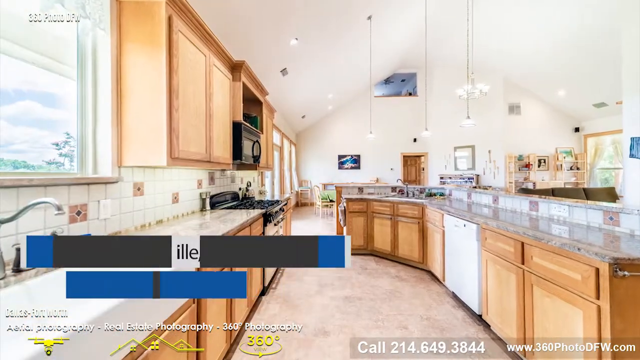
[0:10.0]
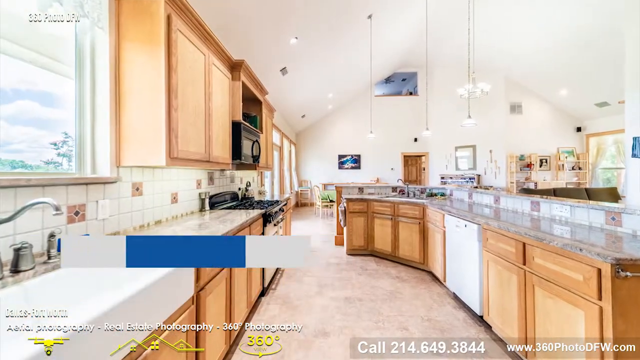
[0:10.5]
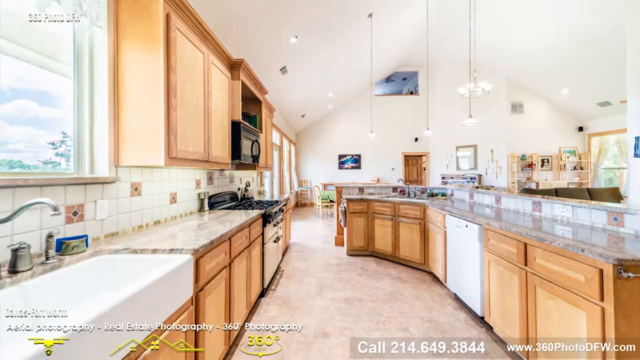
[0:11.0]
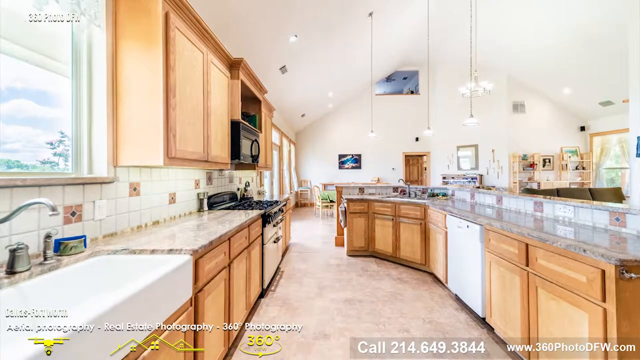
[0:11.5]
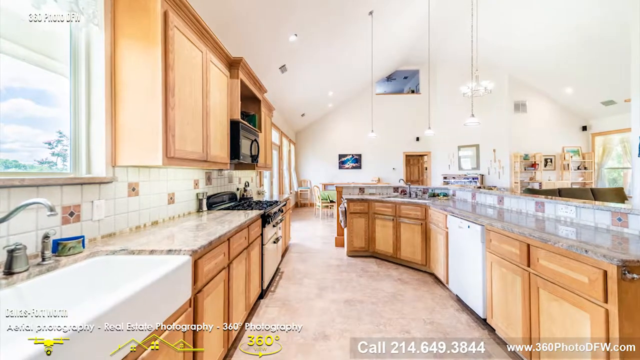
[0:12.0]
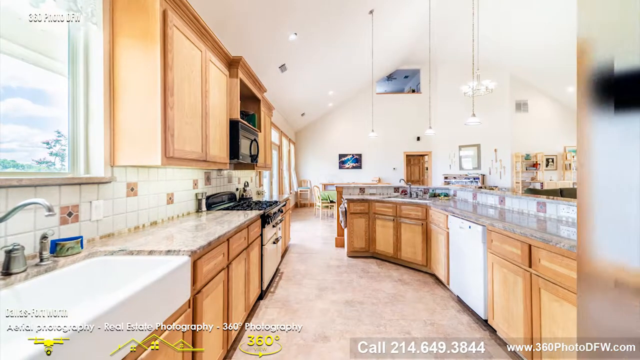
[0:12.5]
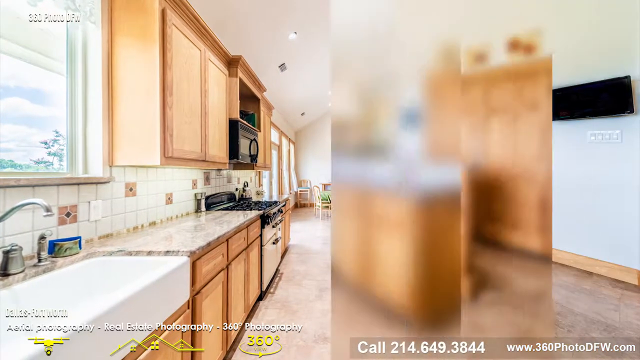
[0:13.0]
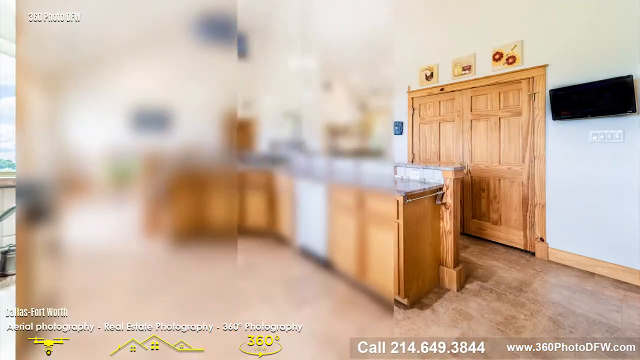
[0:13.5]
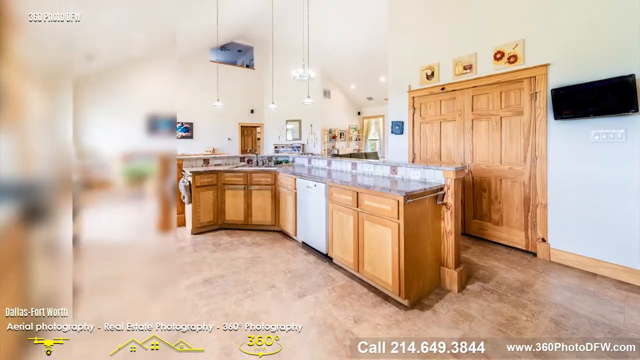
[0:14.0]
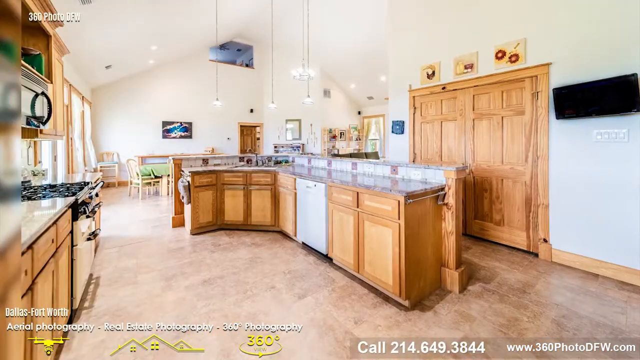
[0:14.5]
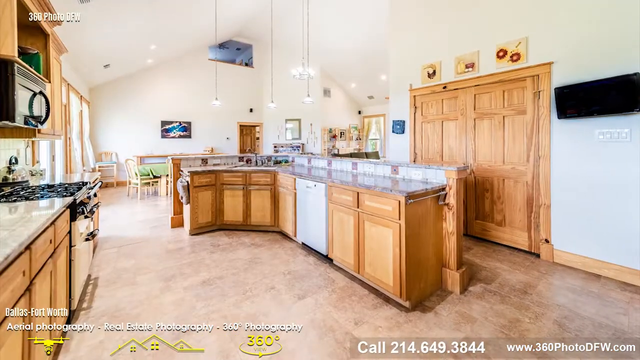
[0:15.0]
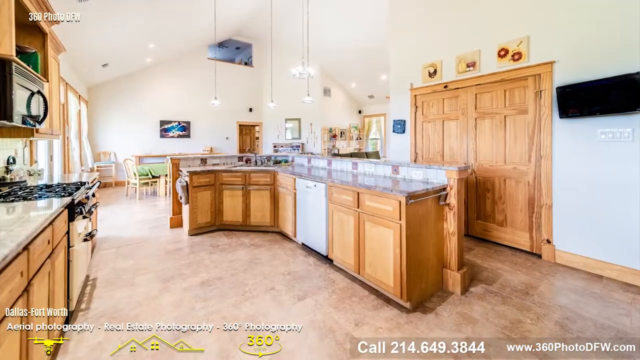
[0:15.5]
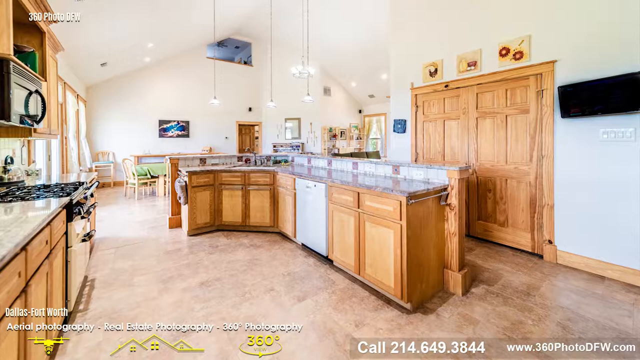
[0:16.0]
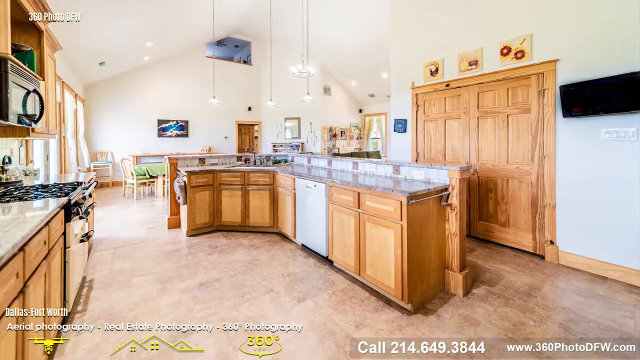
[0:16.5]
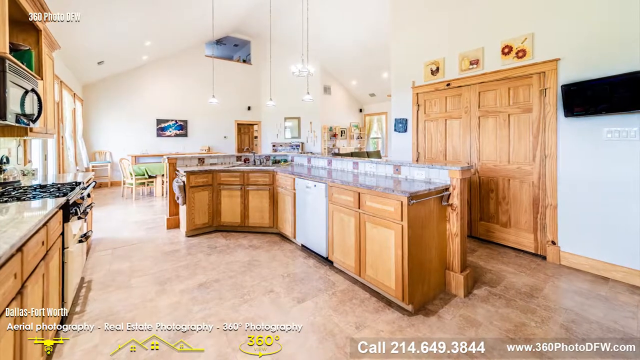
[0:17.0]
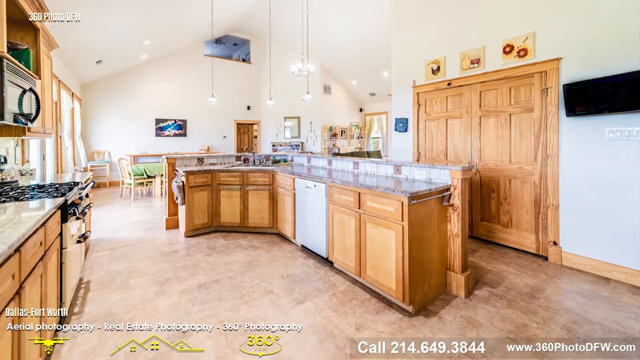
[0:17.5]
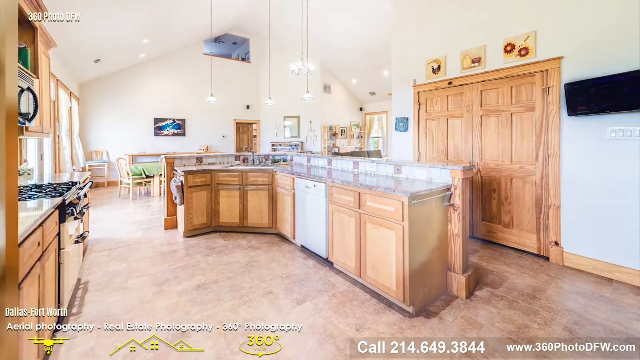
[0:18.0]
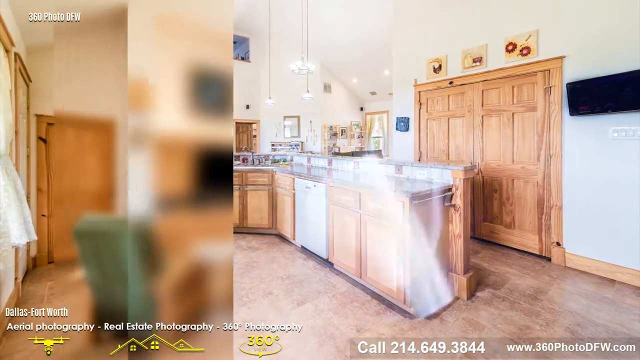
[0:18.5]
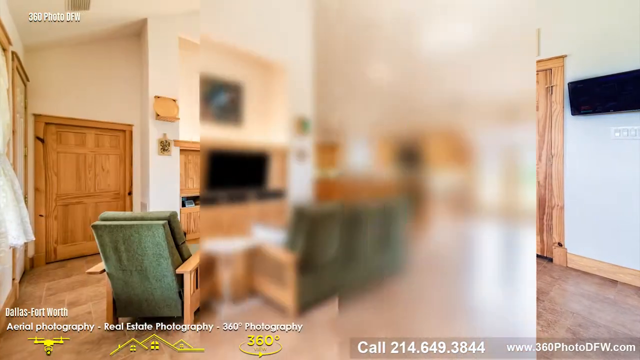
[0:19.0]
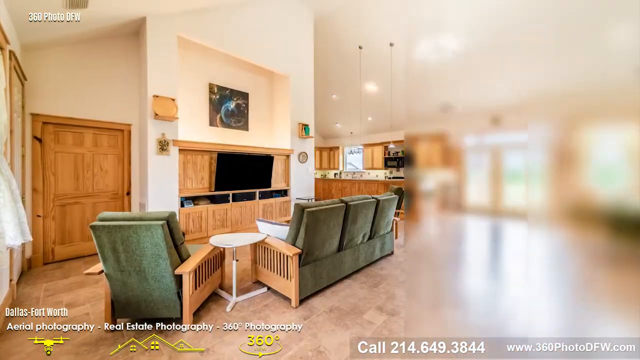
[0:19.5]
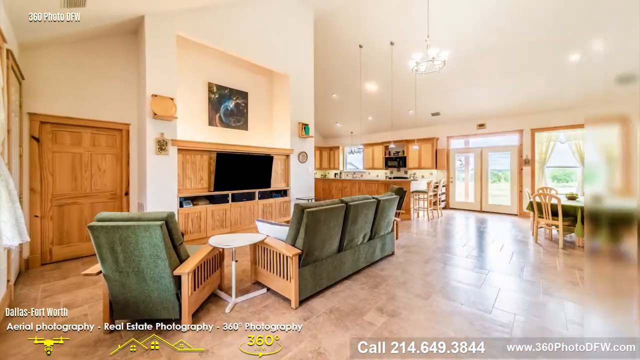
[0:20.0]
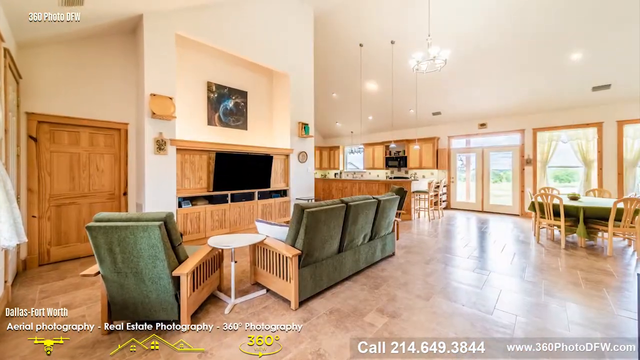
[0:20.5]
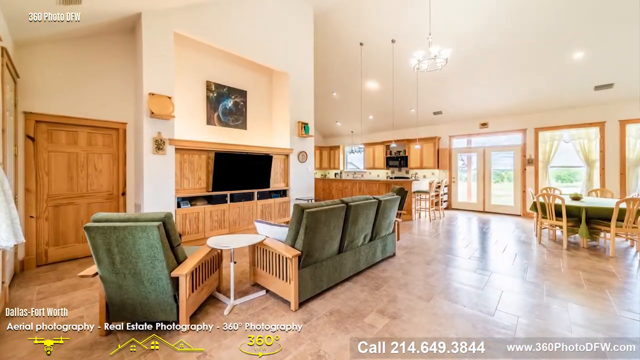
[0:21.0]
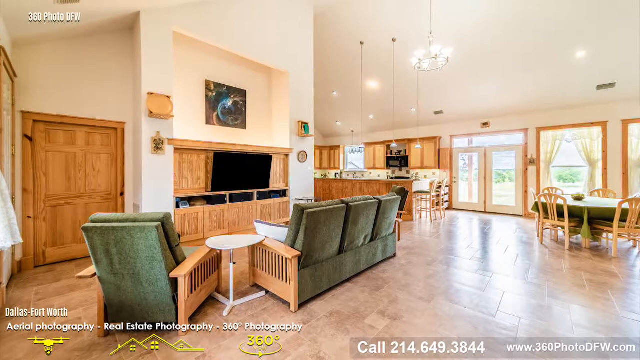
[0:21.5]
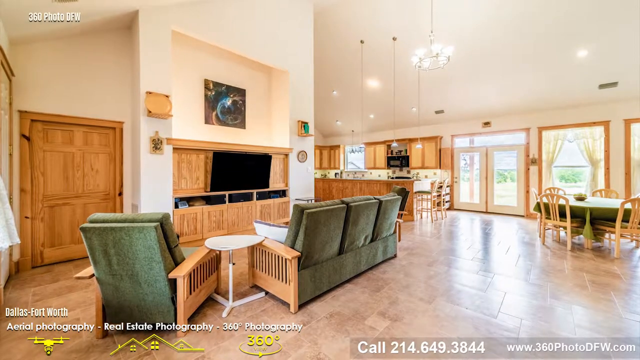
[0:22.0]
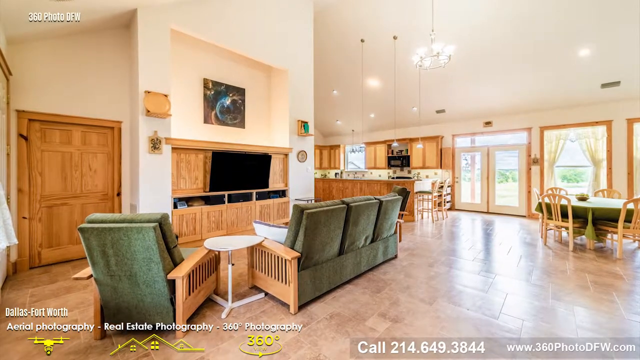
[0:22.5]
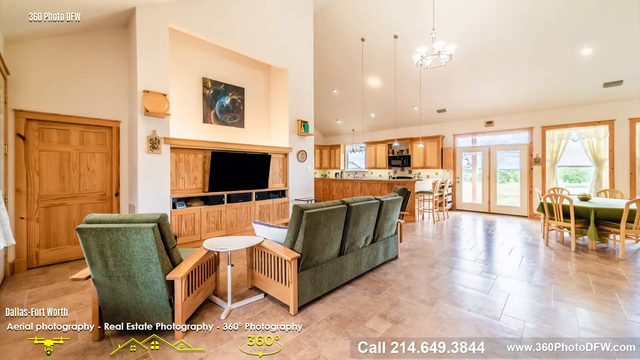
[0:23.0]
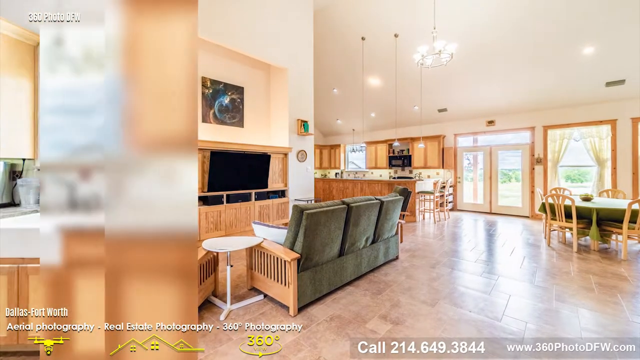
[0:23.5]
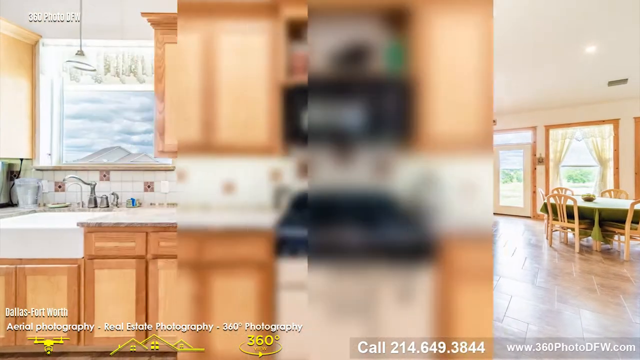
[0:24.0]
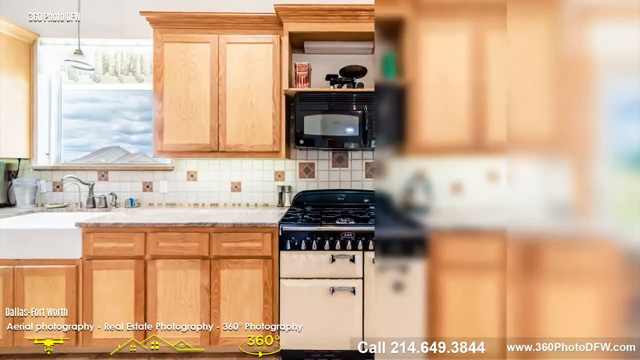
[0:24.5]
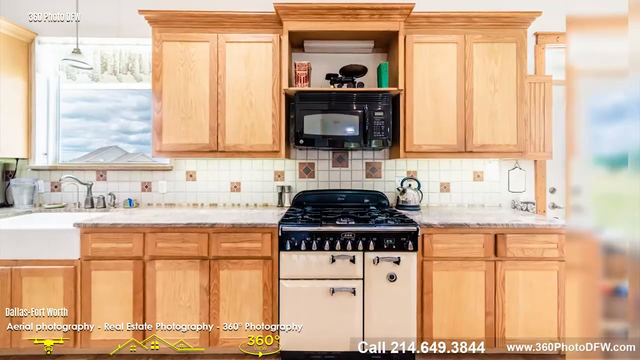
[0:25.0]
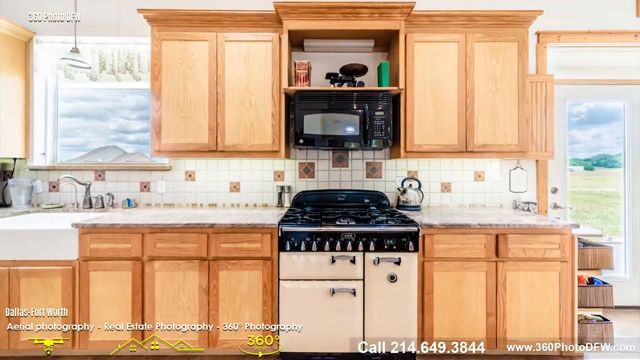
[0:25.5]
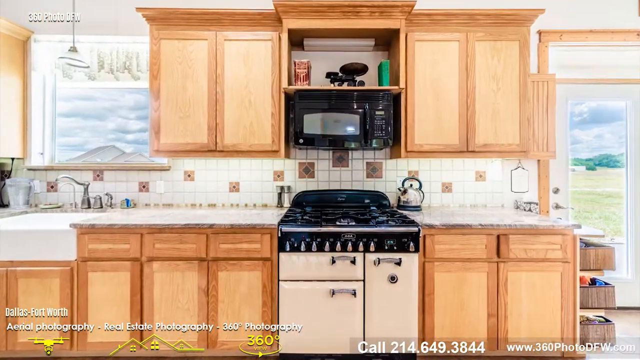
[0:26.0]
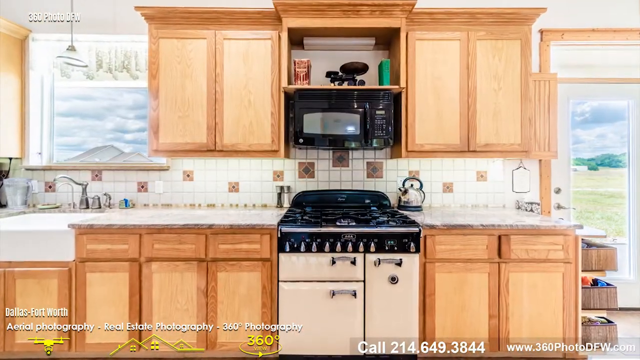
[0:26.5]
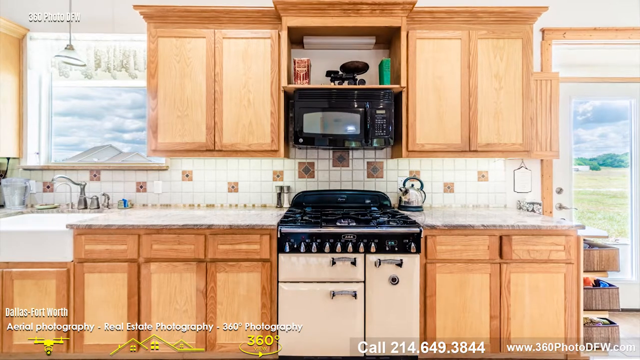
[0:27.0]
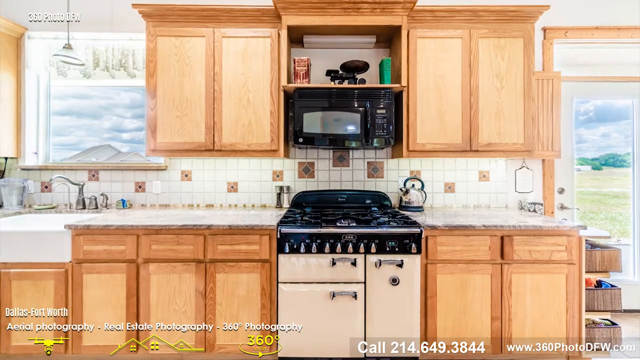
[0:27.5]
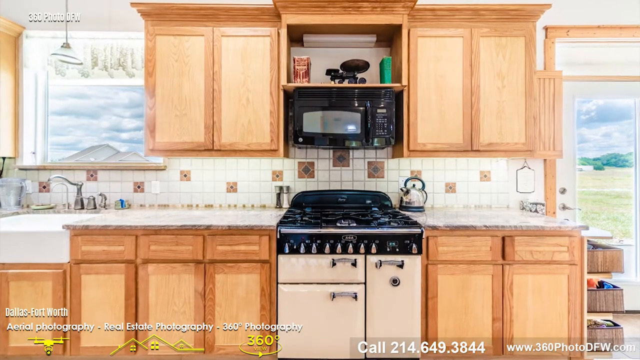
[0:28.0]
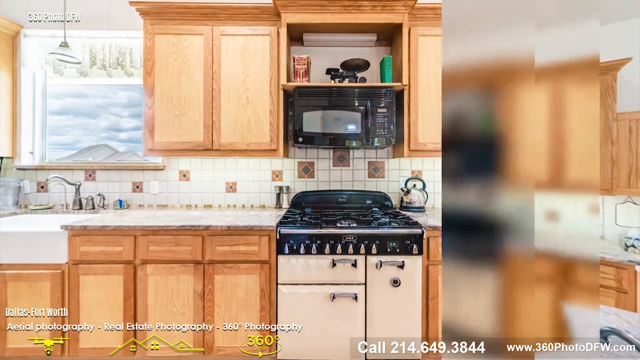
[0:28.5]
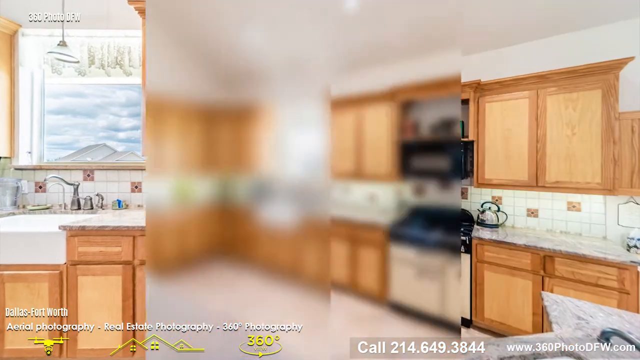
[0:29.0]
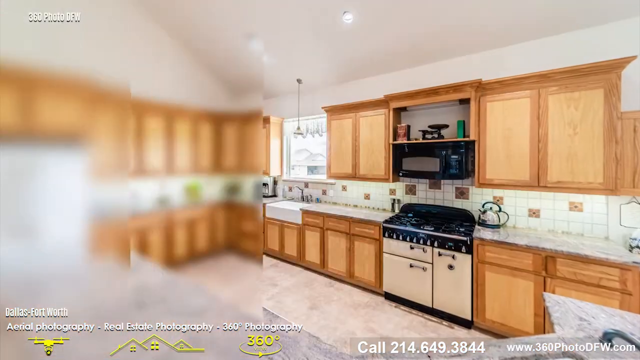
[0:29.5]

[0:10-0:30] The still image of the kitchen shows counters on either side, with the living room in the background as part of the open floor plan. A wipe leads to a different angle of the kitchen, which also shows two very large wooden double doors leading to another room, many switches on the wall, and minimal artwork a little above the doors. Another wipe shows the open-plan kitchen and living room from an angle showing more of the living room: a green couch and a green chair with an end table between them, facing an entertainment center with a medium-sized flat-screen TV, some cabinets, and a little artwork above. Another large wooden door is to the left. The common look of the house is light brown wood and large doors. A wipe leads to a still image facing straight ahead at the appliance section of the kitchen, with the stove and microwave under a hood. A tea kettle is on the counter to the right of the stove. On the left side of the frame is the kitchen sink with a small window above it, open for daylight. Another wipe shows a further still view of the kitchen with more angles of the countertops, appliances, windows, and cabinets.